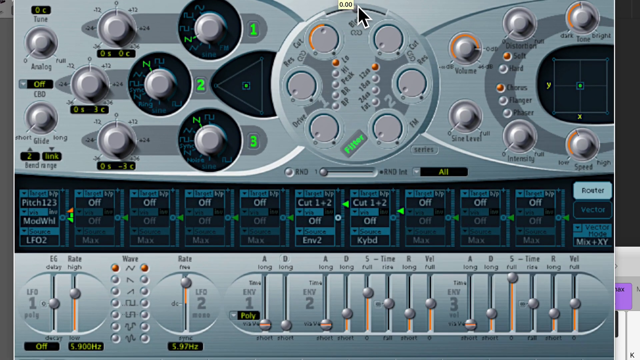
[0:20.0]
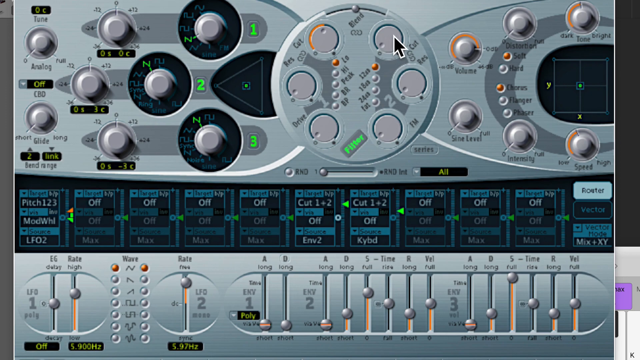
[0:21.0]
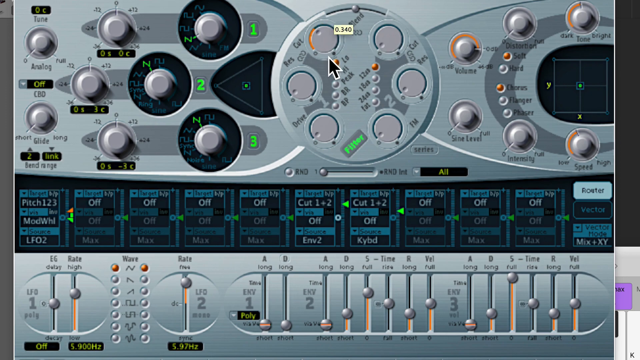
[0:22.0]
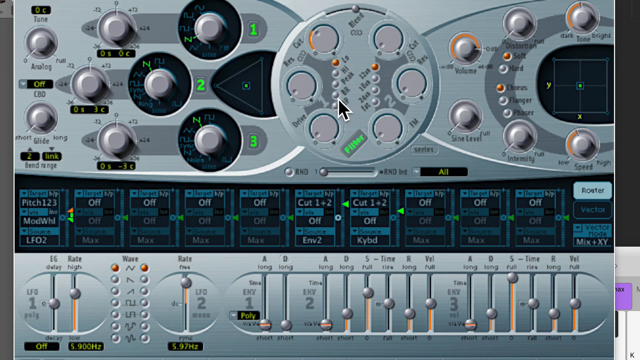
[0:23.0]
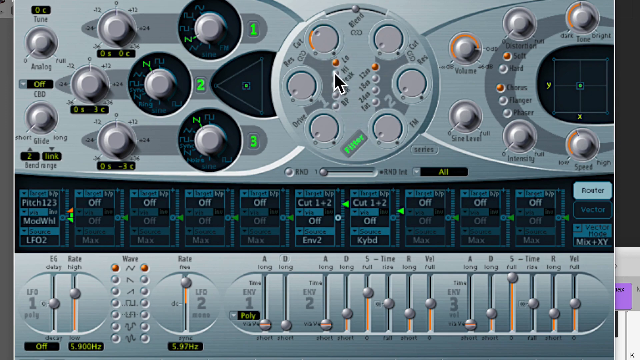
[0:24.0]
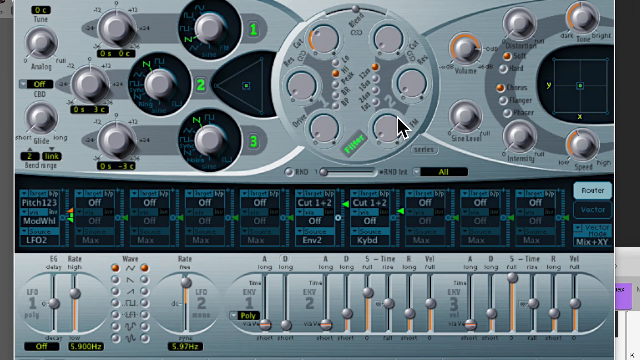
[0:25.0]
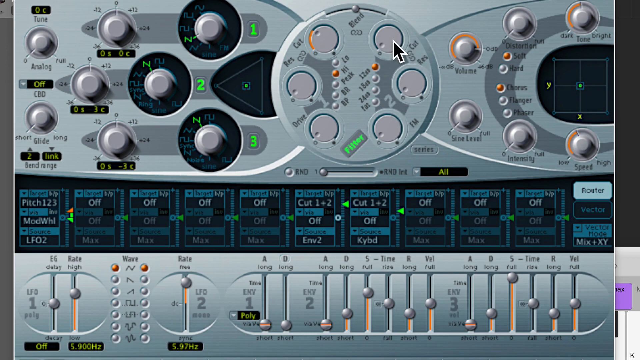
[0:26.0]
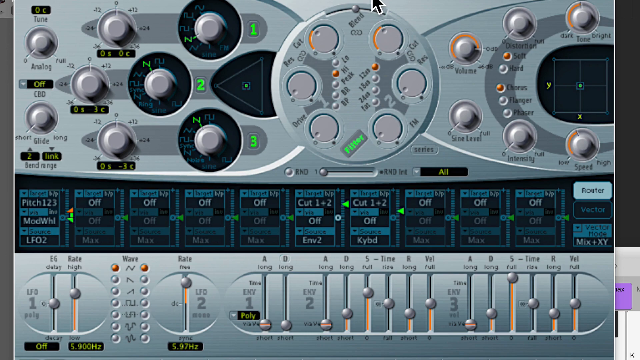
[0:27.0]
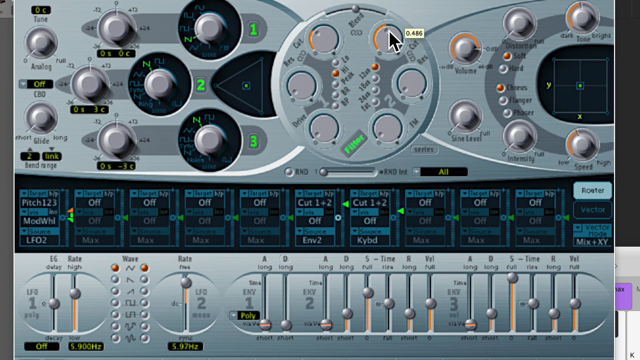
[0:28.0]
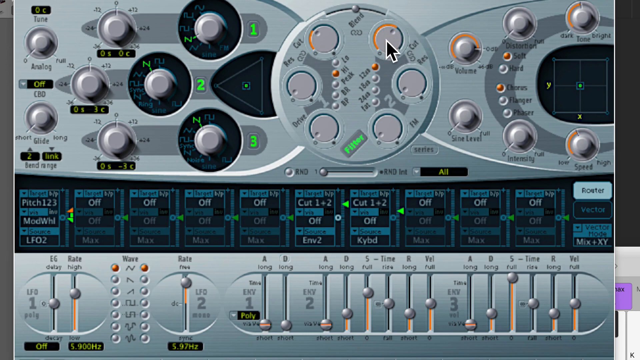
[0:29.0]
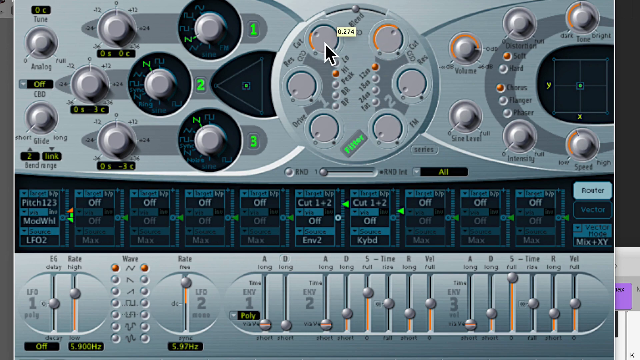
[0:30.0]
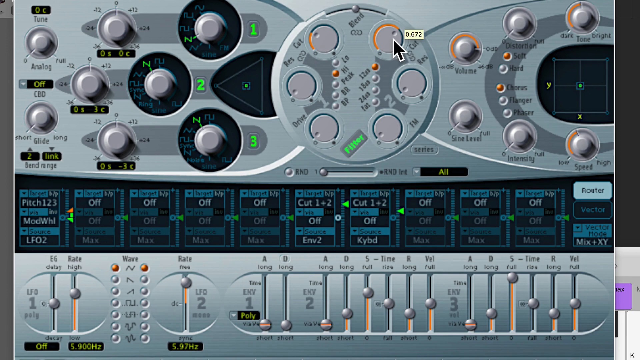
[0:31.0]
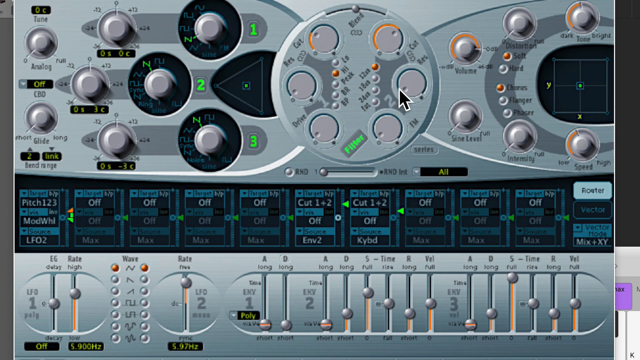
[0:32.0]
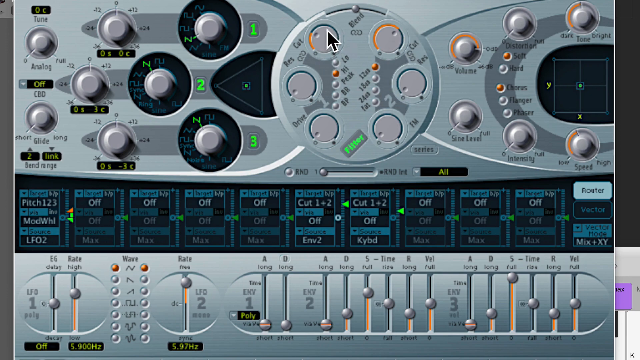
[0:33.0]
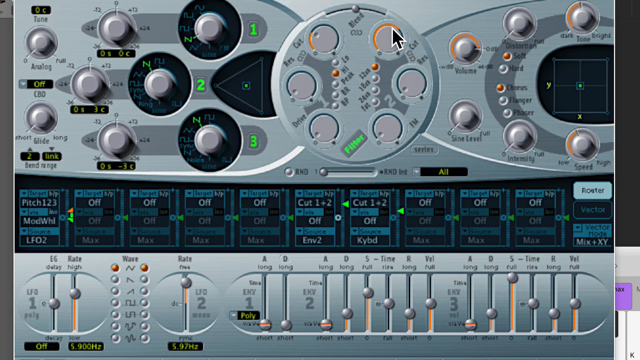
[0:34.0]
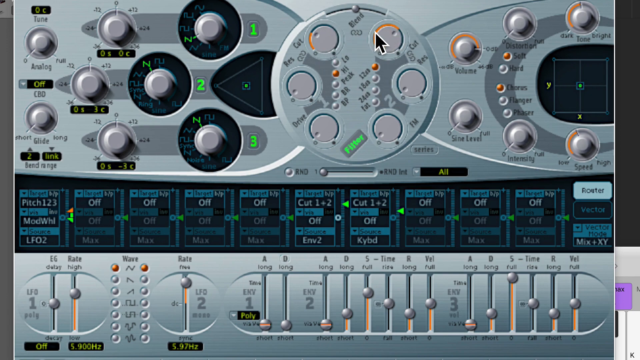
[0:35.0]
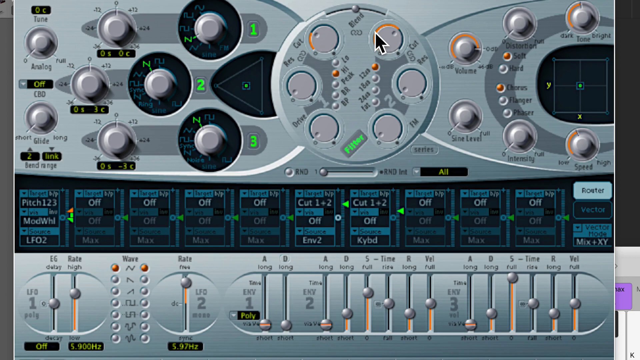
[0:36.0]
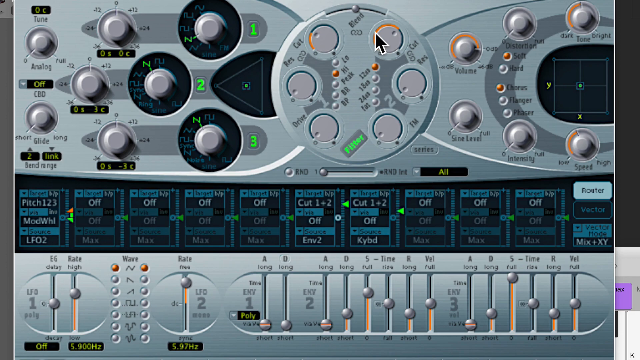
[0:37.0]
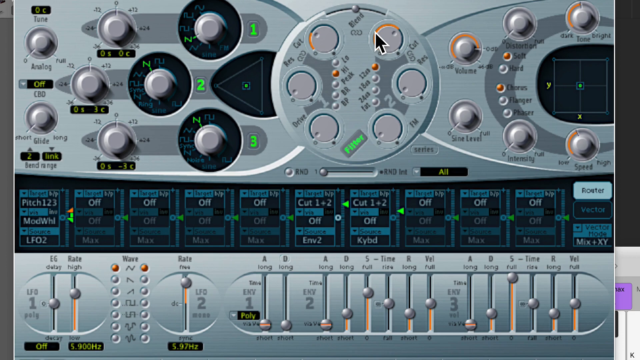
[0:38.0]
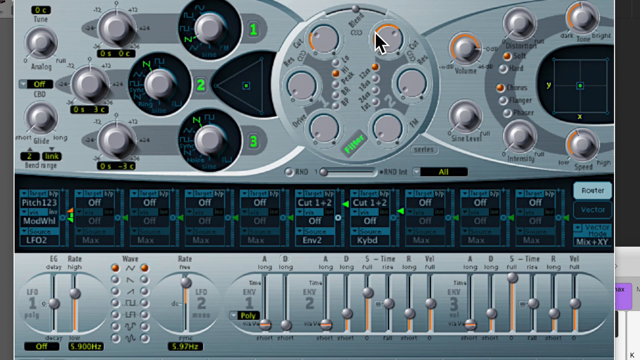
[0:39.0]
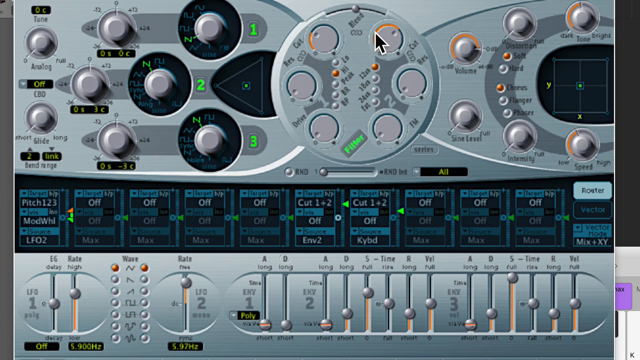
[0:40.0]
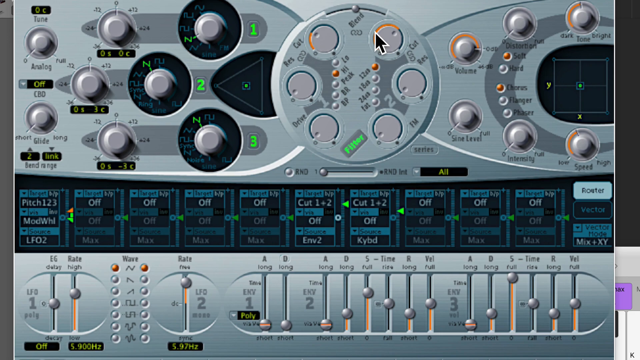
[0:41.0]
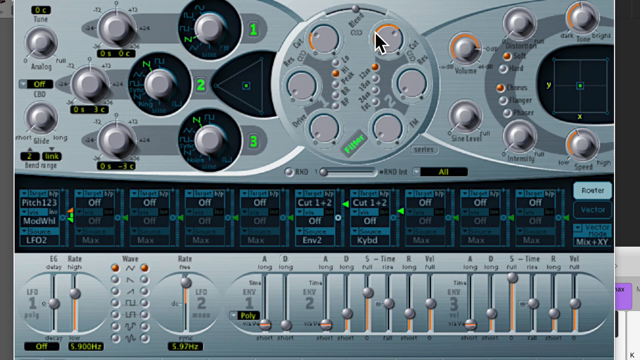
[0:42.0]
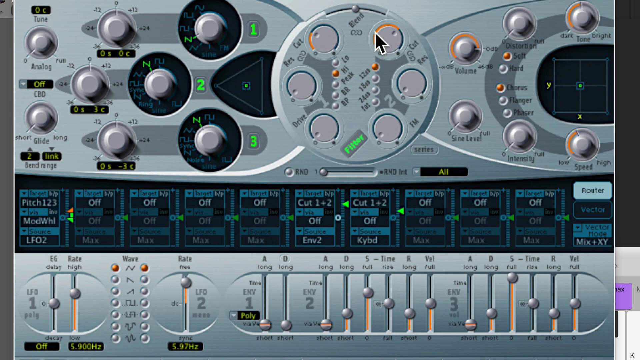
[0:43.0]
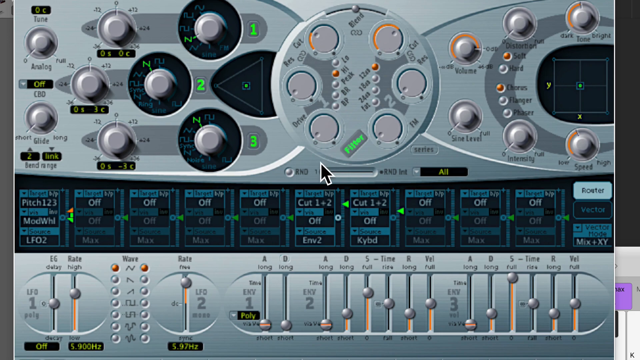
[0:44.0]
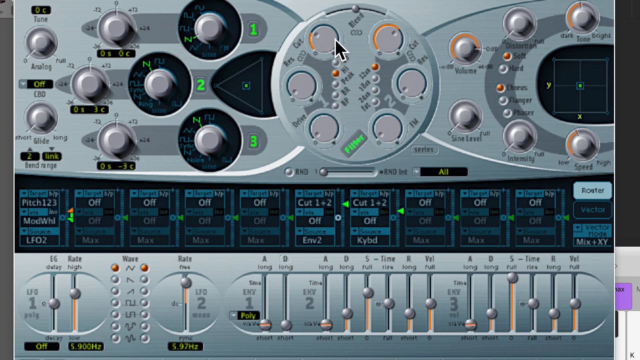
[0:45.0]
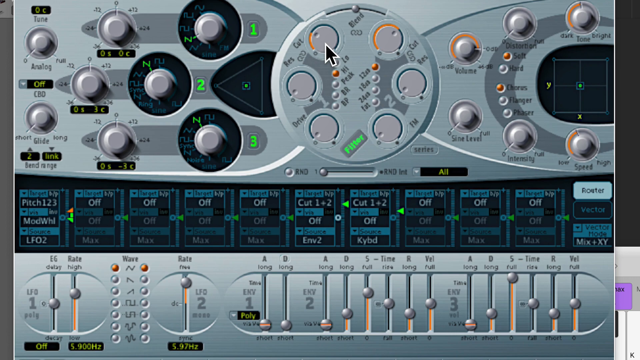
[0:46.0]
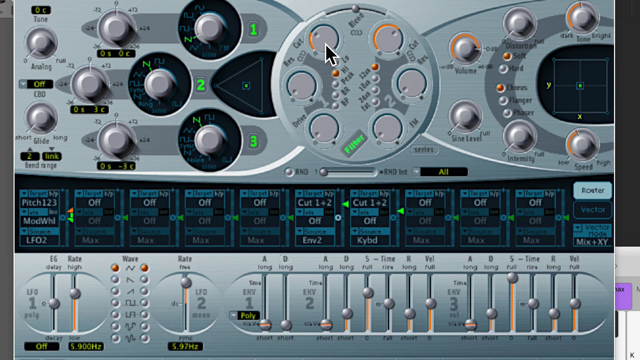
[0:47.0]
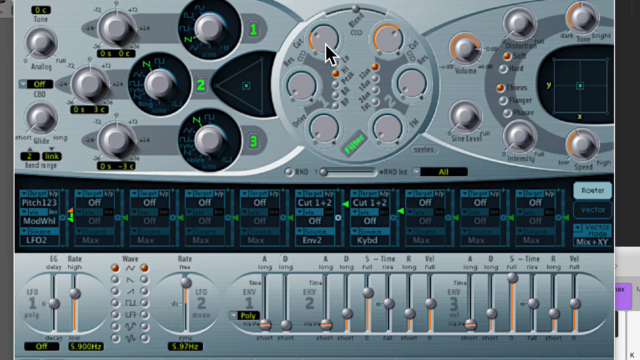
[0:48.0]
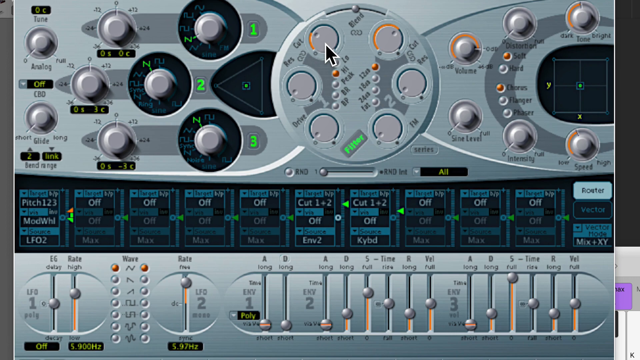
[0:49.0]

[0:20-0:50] The user adjusts the levels on several knobs in the interface and selects different options represented by inputs, choosing the option that reads "HI" for the filter. They continue adjusting several knobs, turning them up or down. The user then stalls, possibly testing the audio of the virtual piano device, and continues adjusting knobs, possibly trying to tune the piano to a specific sound. The interface shows options such as "pitch", "mod", "whl", and "lfo2". There are tens of tuning options, different input options, and several volume options for things such as the long A and long D options. The user's virtual piano is behind this tuning interface.